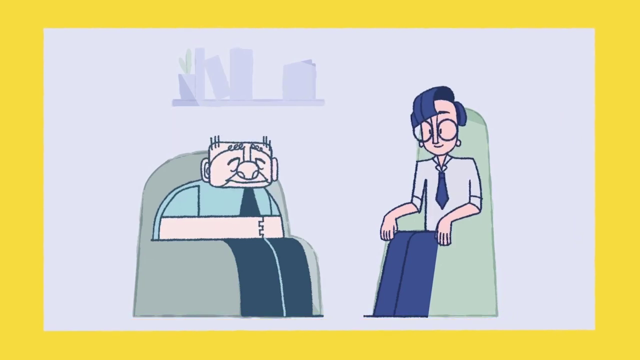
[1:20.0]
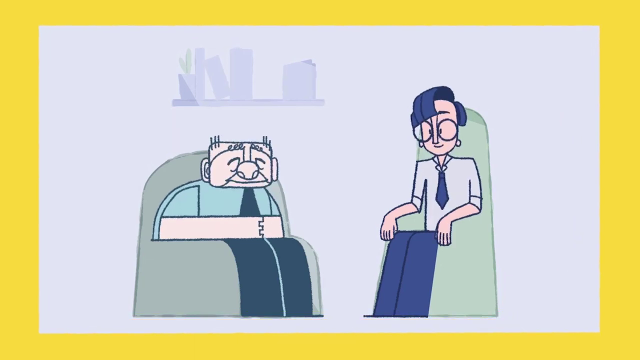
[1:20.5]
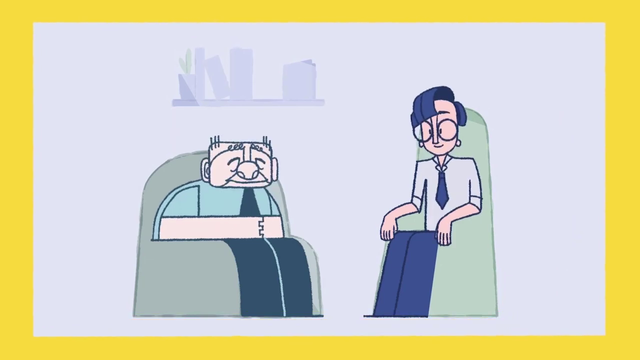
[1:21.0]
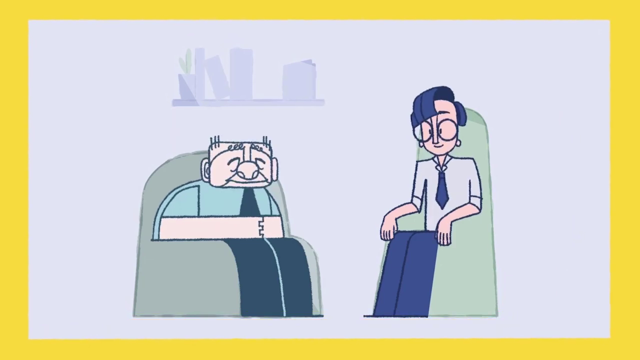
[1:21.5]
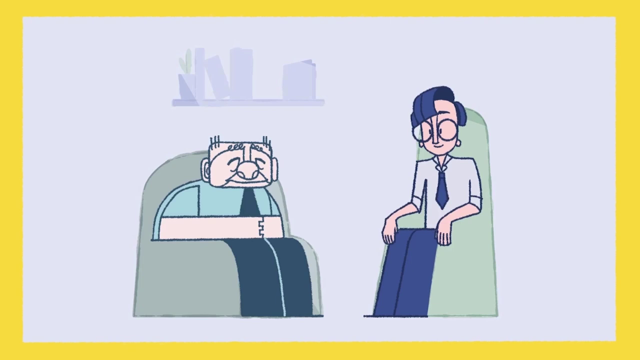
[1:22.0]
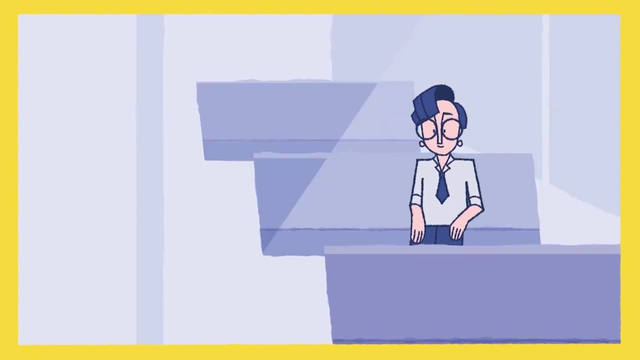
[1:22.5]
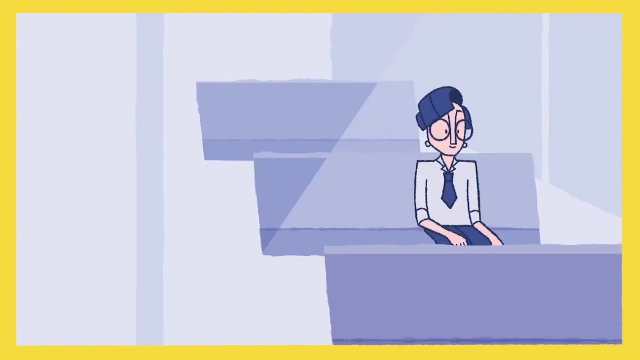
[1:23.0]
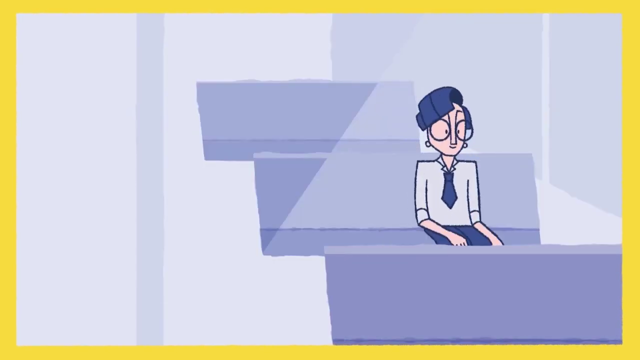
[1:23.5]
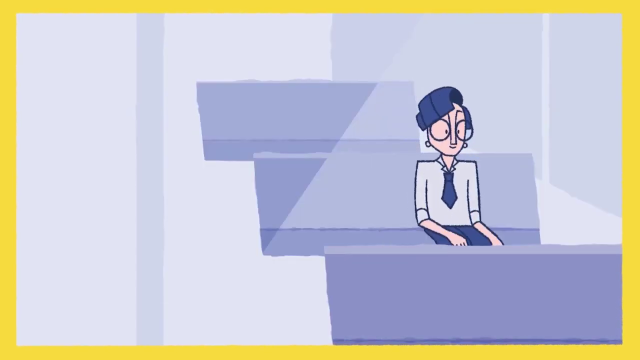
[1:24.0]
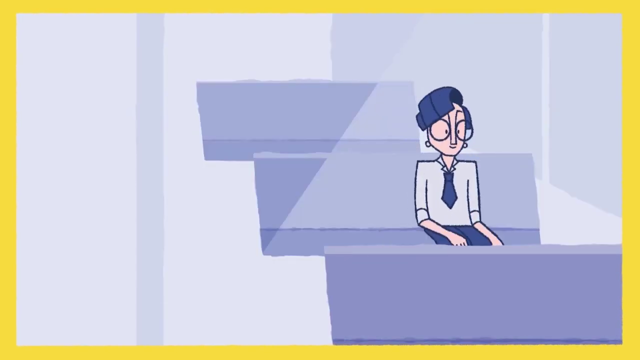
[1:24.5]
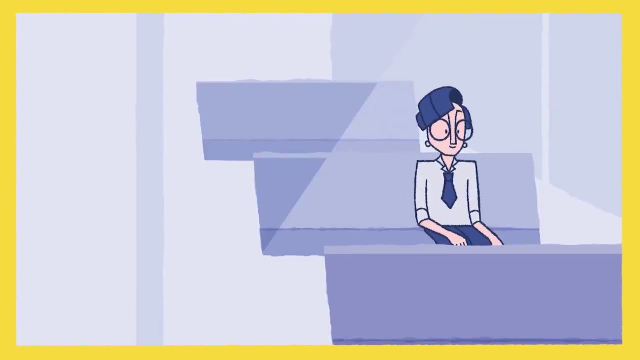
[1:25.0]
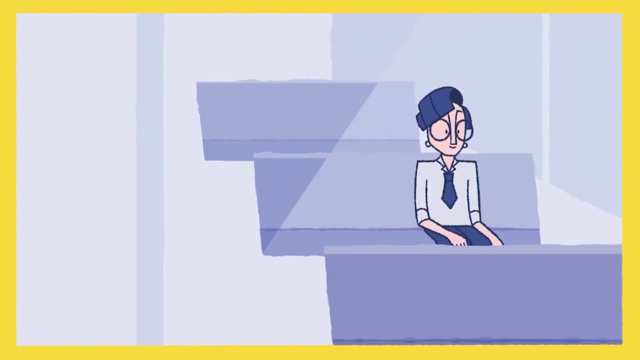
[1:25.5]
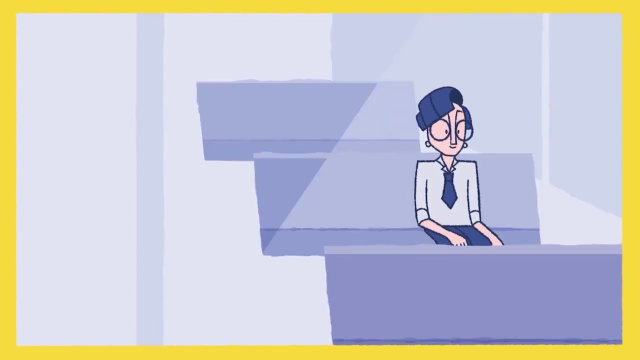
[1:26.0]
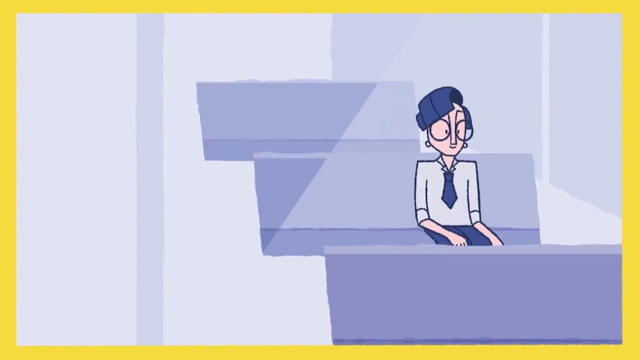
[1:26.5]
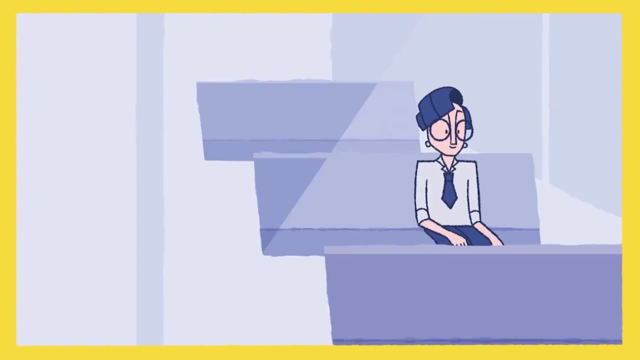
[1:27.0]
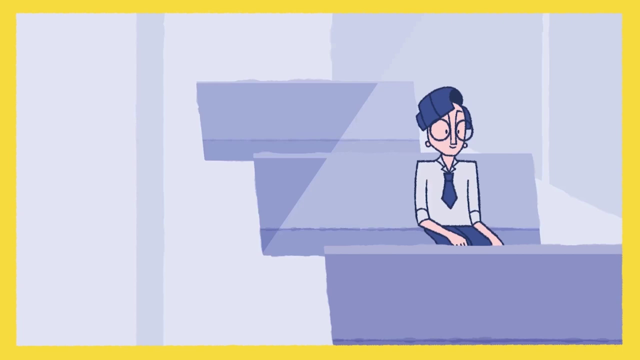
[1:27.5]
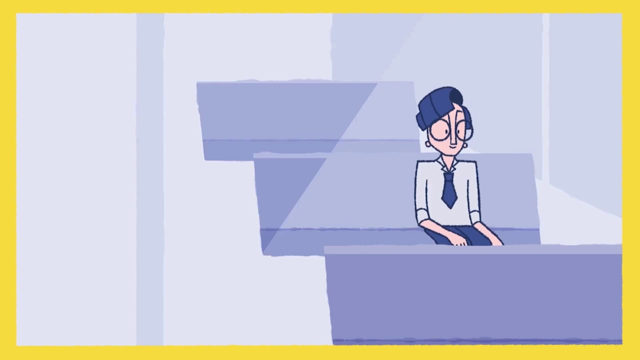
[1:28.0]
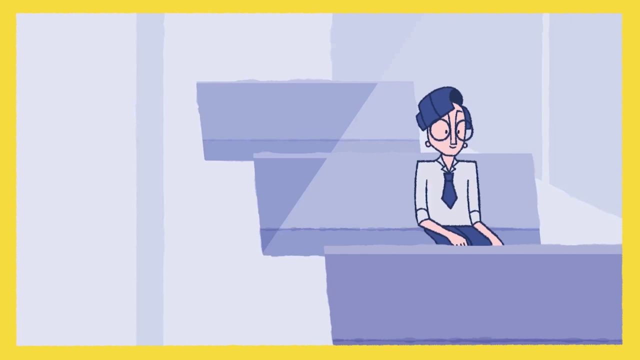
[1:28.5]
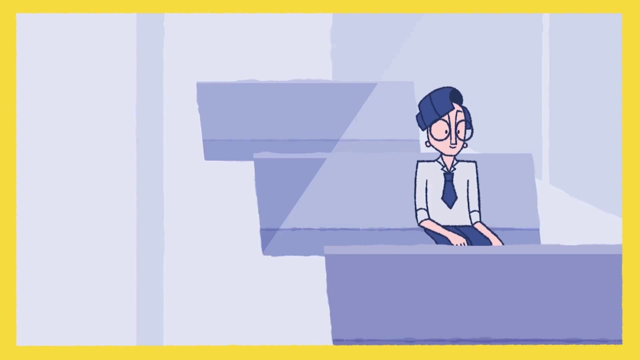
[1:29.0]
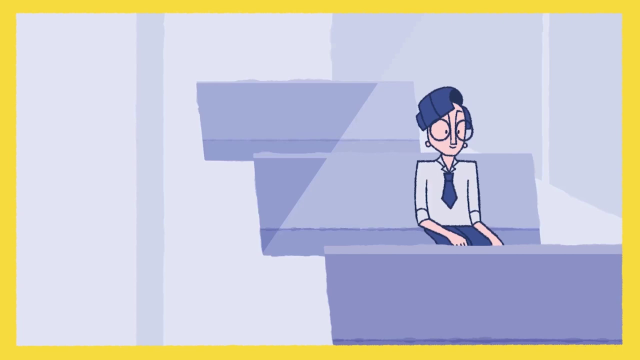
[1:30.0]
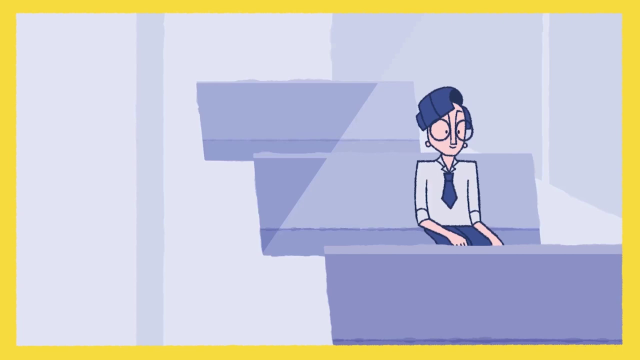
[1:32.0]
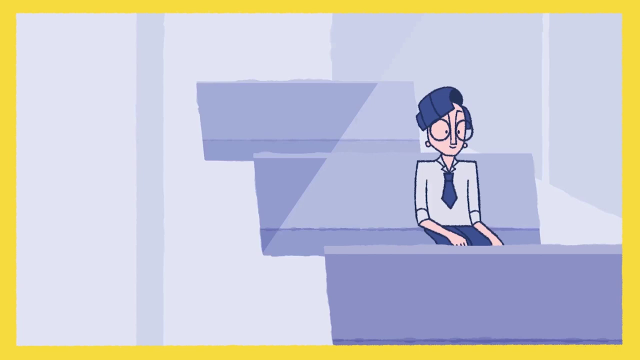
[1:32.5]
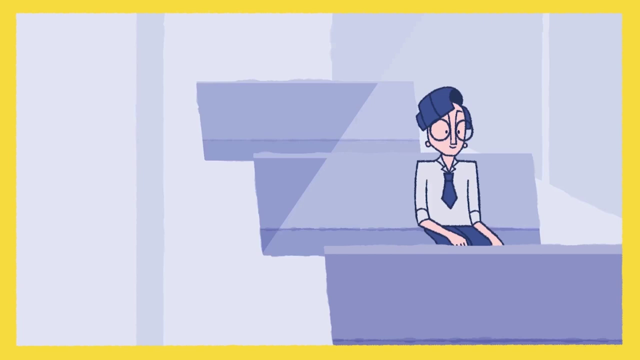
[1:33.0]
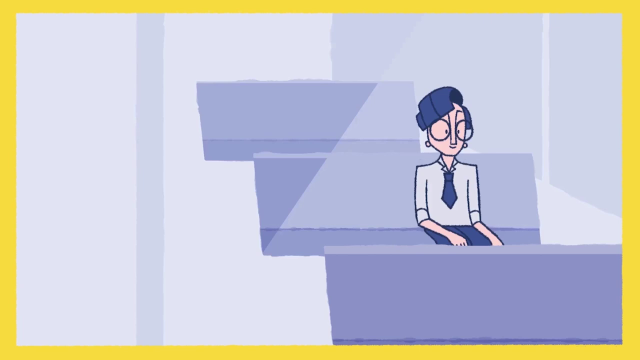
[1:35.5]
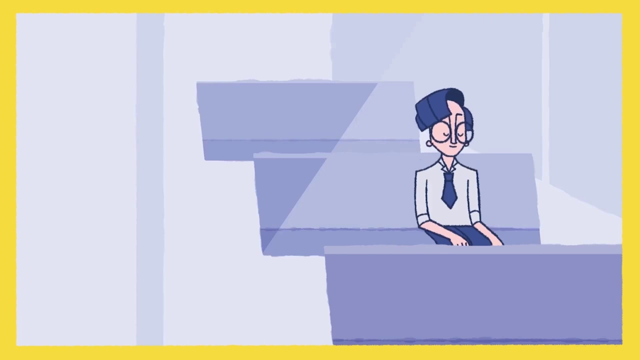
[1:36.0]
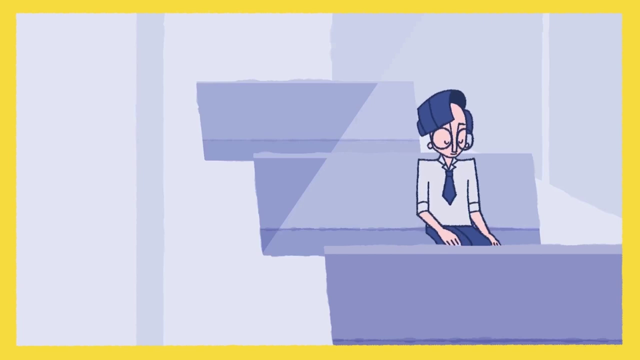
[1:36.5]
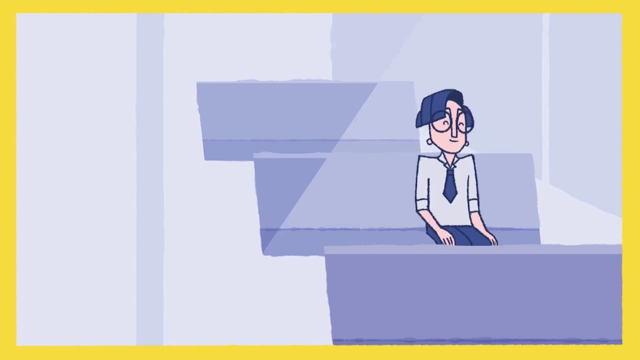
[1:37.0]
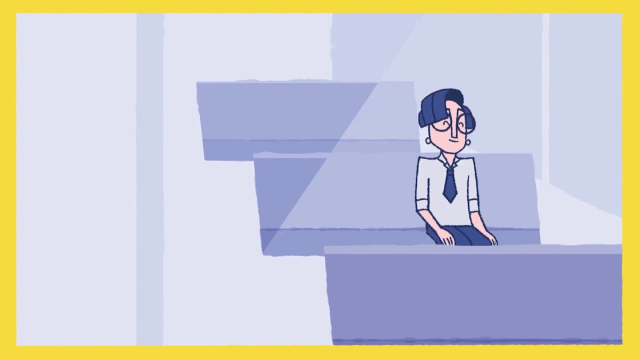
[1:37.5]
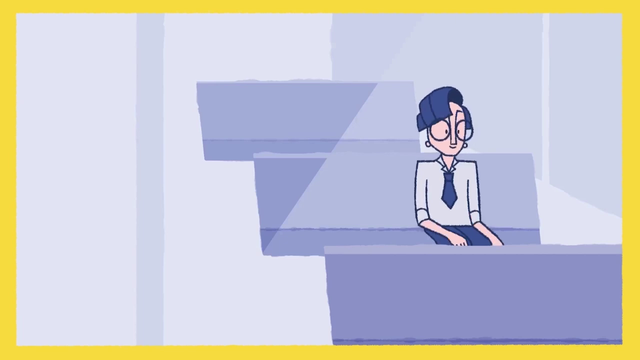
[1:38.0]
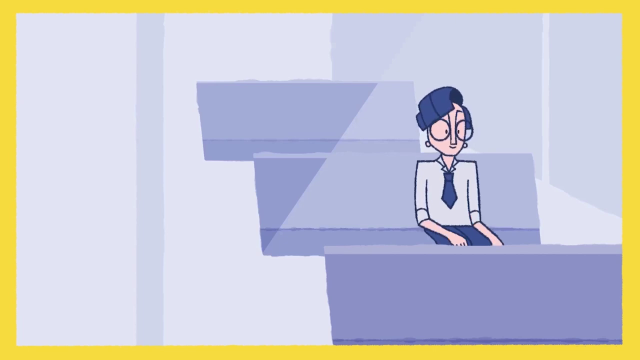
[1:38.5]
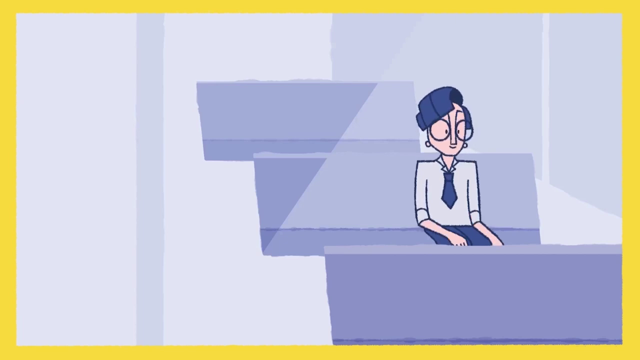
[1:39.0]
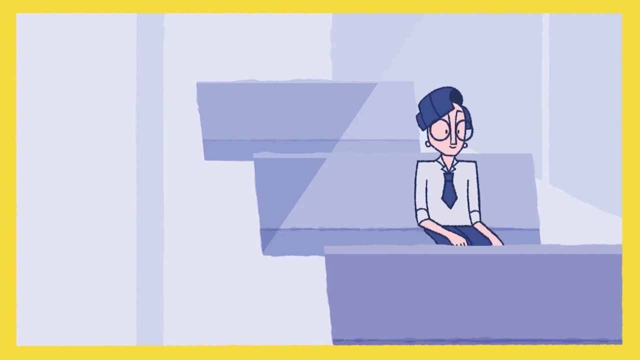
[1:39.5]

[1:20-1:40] The main character, with glasses, a shirt and a tie, sits in an armchair with his arms on its arms and a smile on his face, looking across at the old man, apparently a therapist, in another armchair with a bookcase above him; he has a friendly smile and his hands placed together on his lap. As the scene gets bigger, the main character is seen sitting on what appears to be a bus seat, apparently where he was sitting at the start of the video. He looks straight ahead, much happier and not tense or anxious. He takes a deep breath, leans back in his seat and looks much more content. The yellow background is almost completely moved out to the very edges of the screen as he is once again on the bus to work, looking much more relaxed.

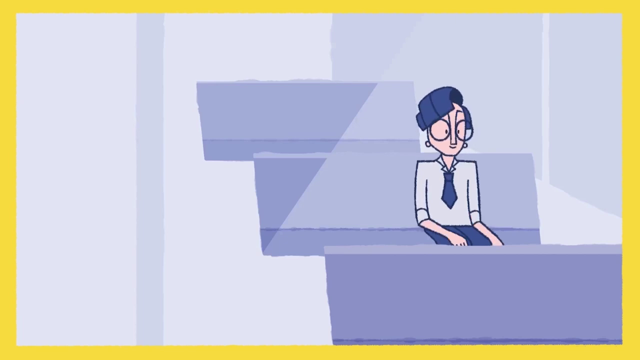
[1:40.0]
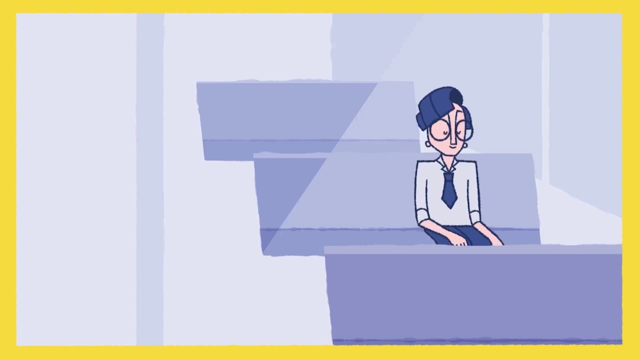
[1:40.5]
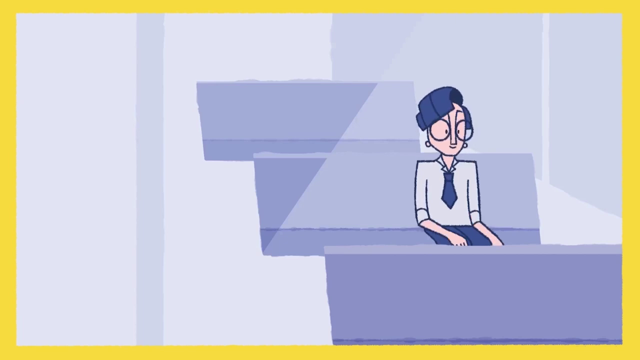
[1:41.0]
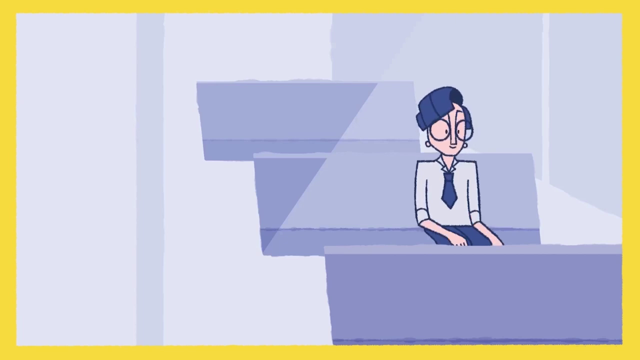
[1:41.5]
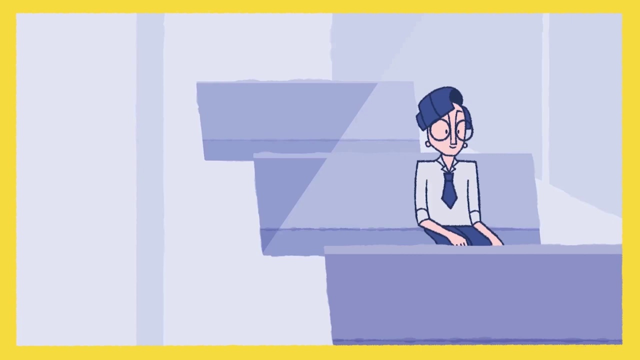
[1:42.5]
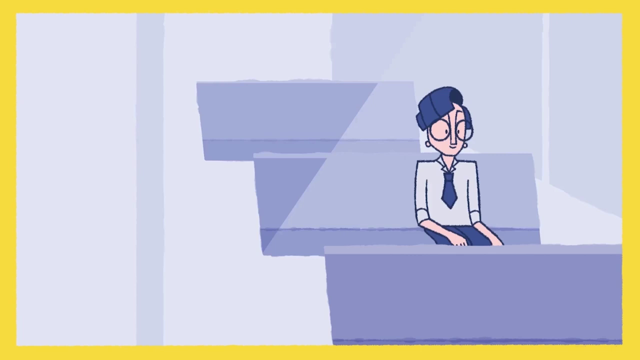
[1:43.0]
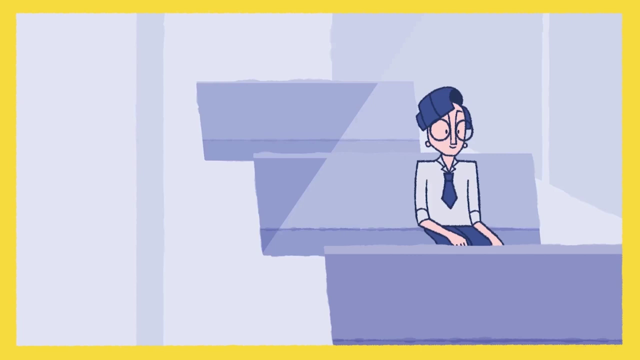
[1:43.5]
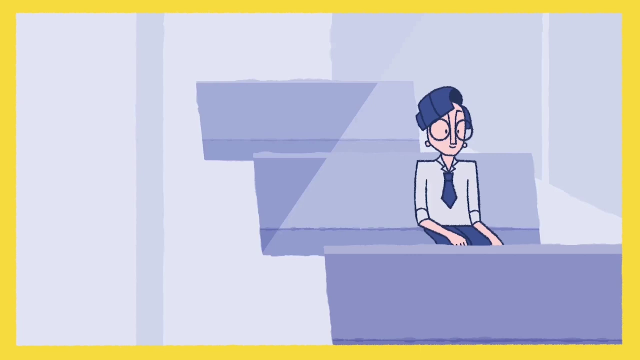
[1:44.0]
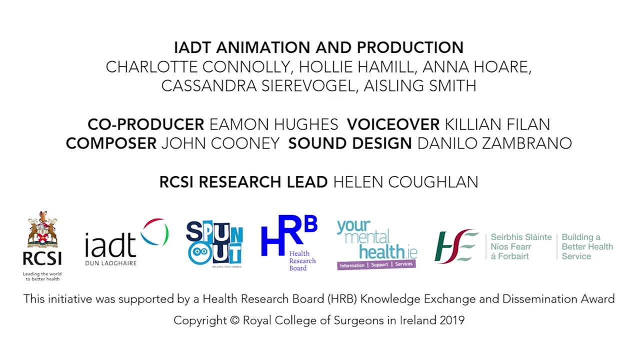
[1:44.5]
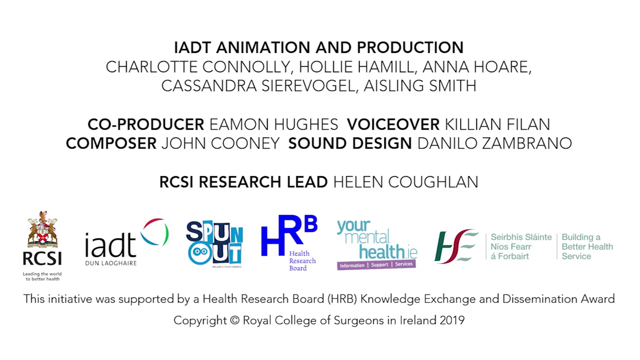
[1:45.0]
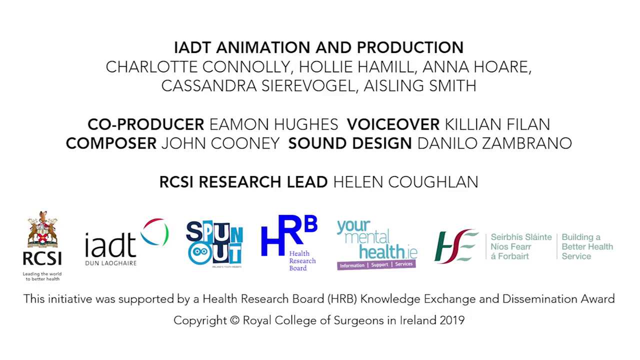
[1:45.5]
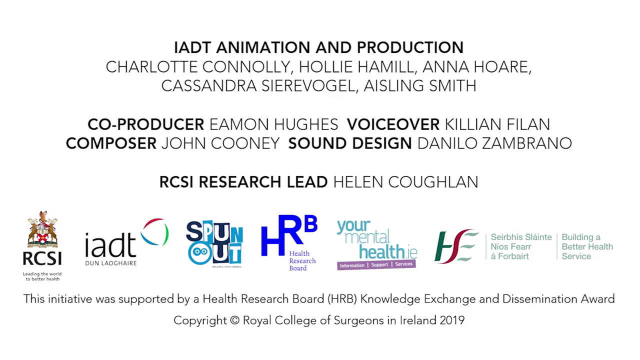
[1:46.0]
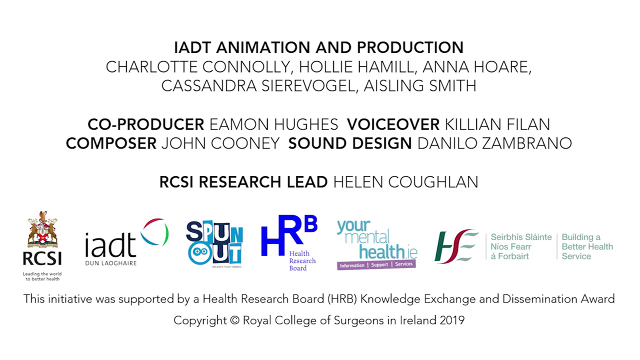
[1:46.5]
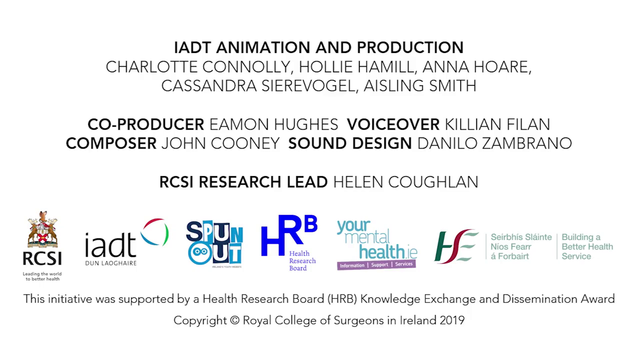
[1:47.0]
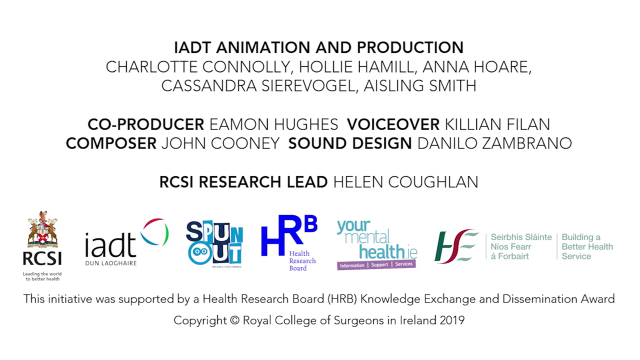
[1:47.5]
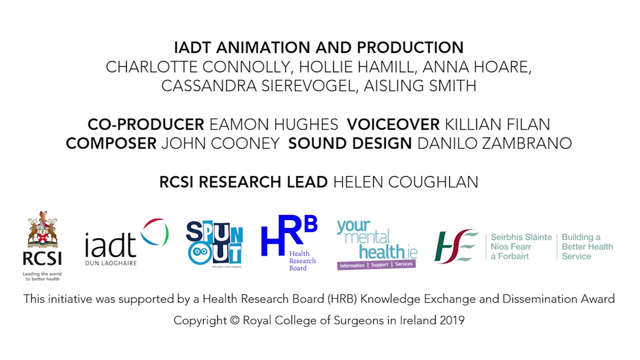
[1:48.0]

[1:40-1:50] In what appears to be the final scene, the main character sits on the bus in the same location as at the start of the video, looking happy and content, without anxiety. The yellow border is almost all the way out at the edge. The closing screen then lists the people who worked on the animation project, with credits for animation production, co-producer, voiceover, composer, sound design and research lead. It also shows logos for various medical and mental health societies, apparently ones that contributed research or cooperated with the project. It states the initiative was supported by the Health Research Board, HRB, Knowledge Exchange and Dissemination Award, with a copyright for the Royal College of Surgeons in Ireland, 2019.